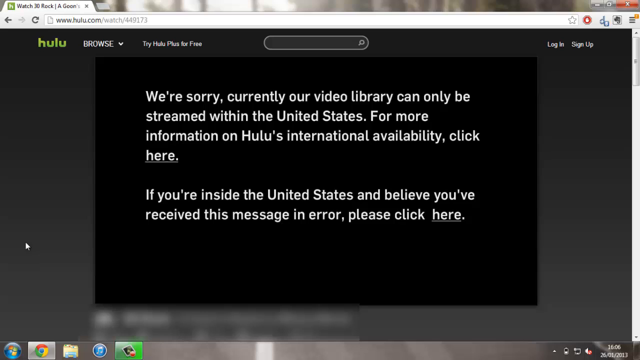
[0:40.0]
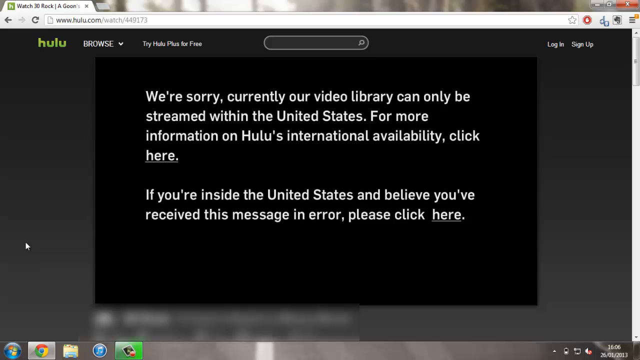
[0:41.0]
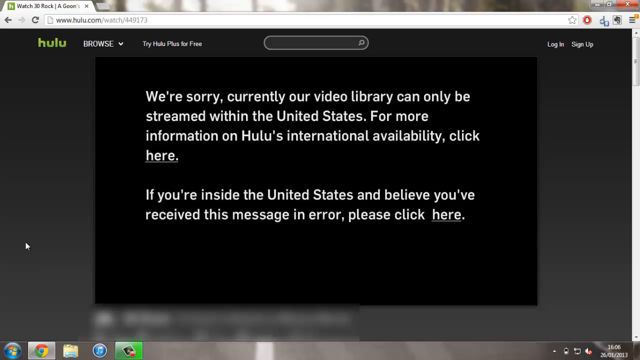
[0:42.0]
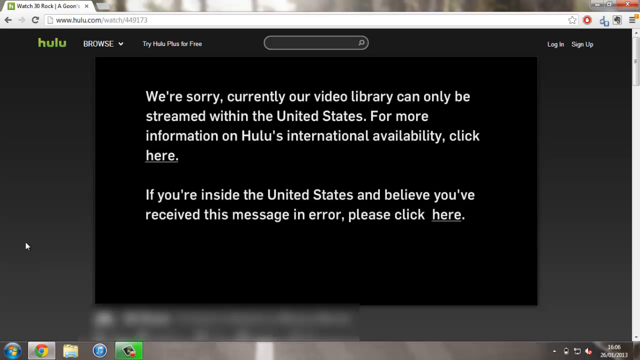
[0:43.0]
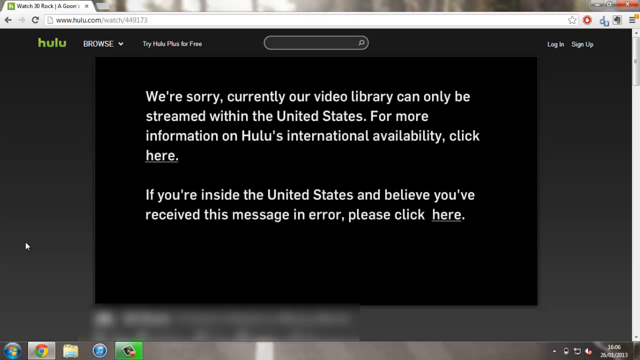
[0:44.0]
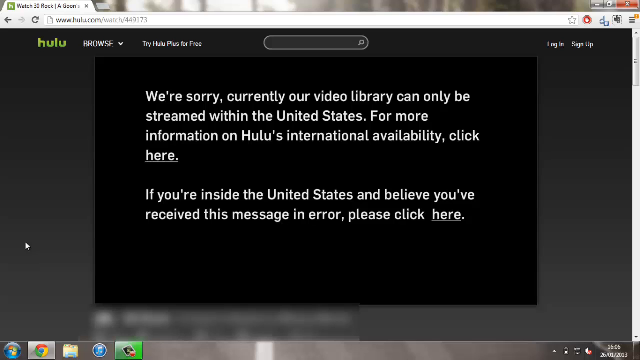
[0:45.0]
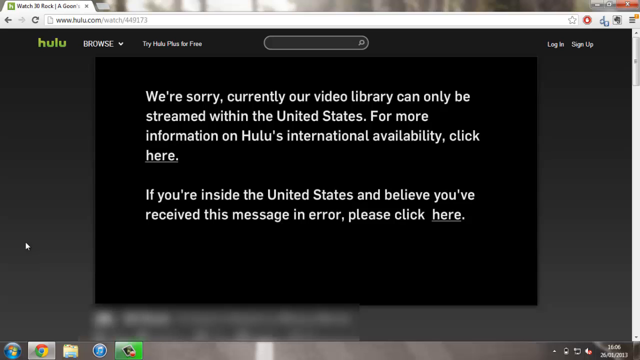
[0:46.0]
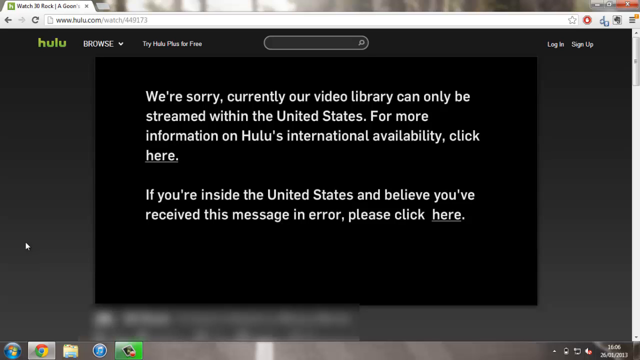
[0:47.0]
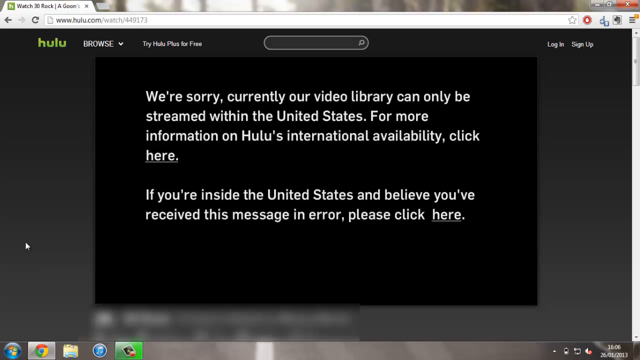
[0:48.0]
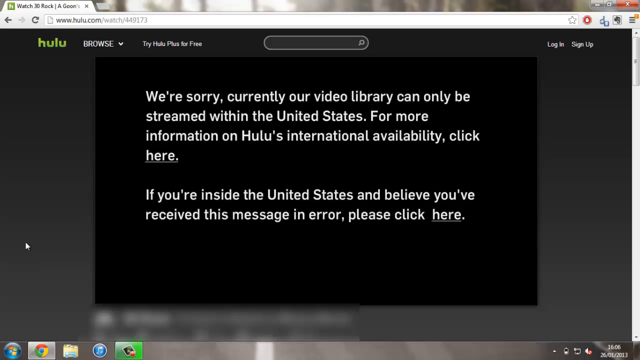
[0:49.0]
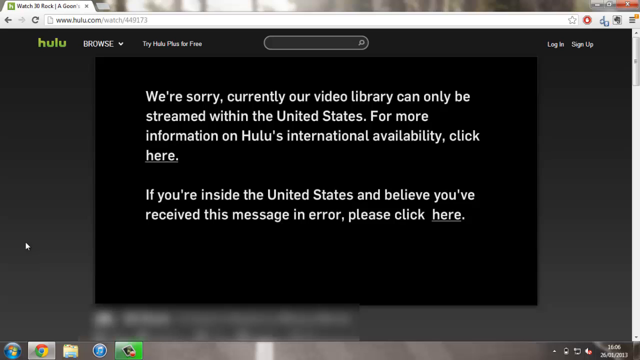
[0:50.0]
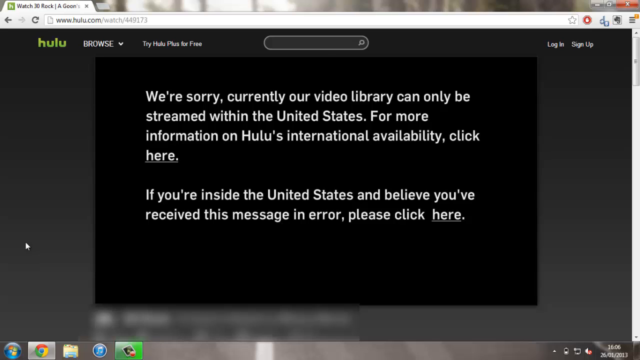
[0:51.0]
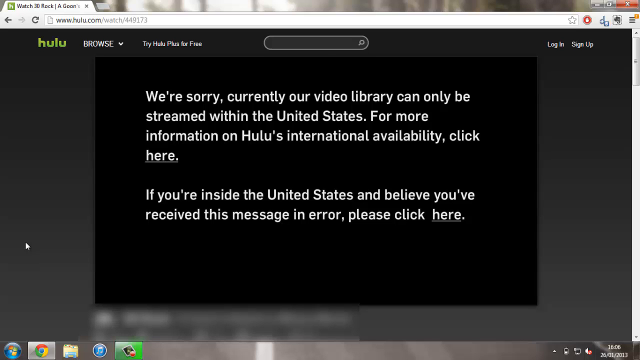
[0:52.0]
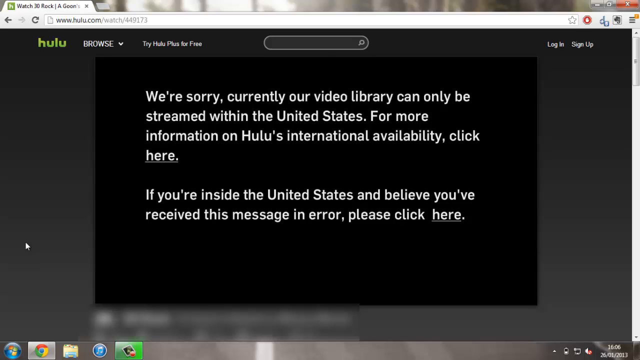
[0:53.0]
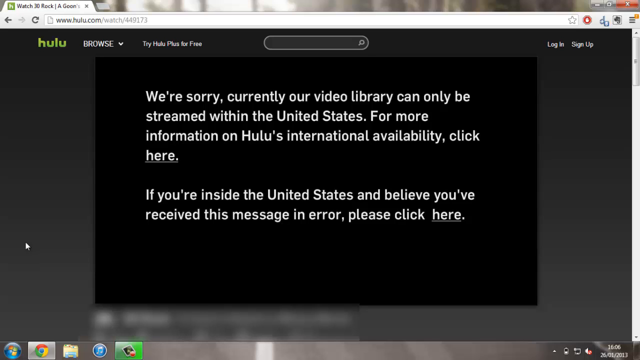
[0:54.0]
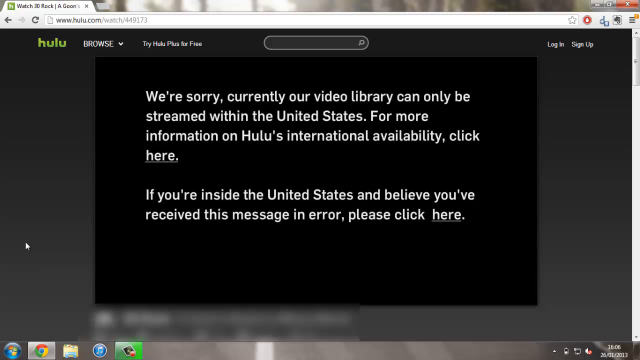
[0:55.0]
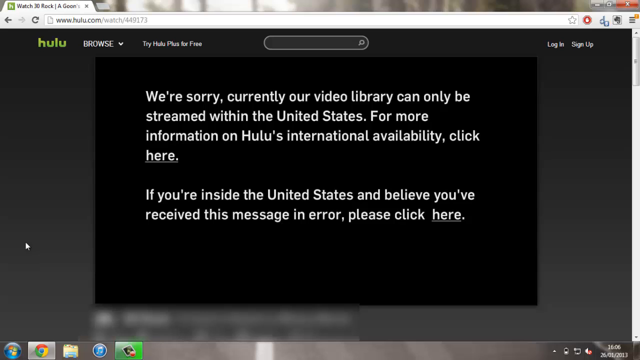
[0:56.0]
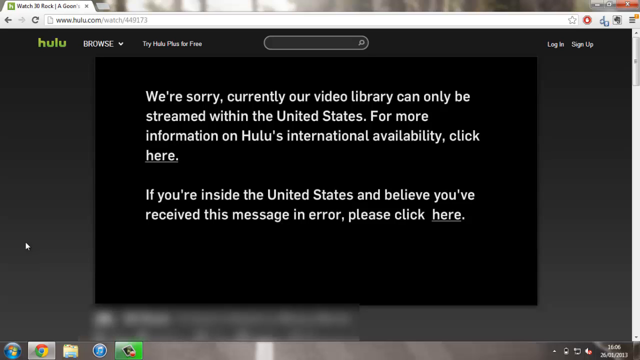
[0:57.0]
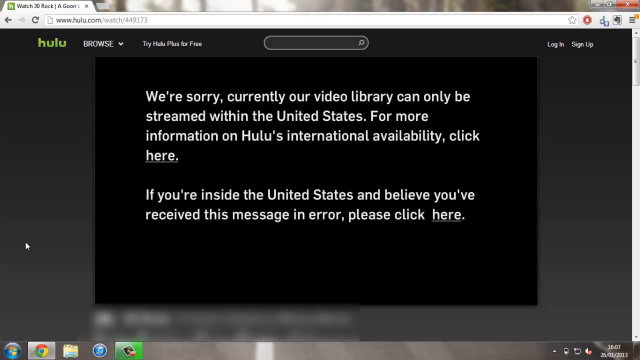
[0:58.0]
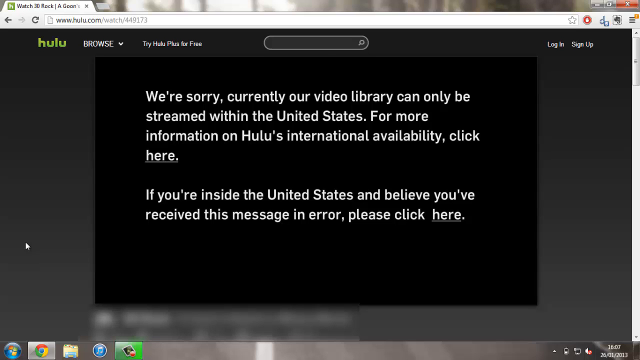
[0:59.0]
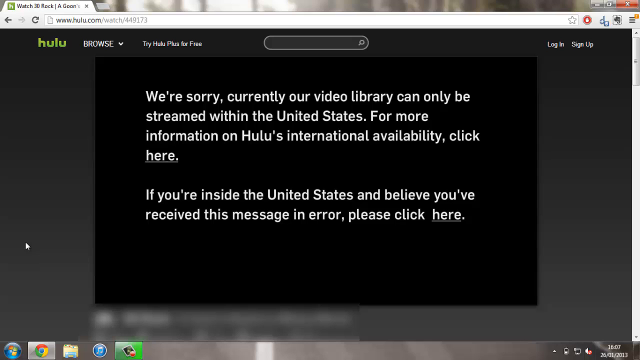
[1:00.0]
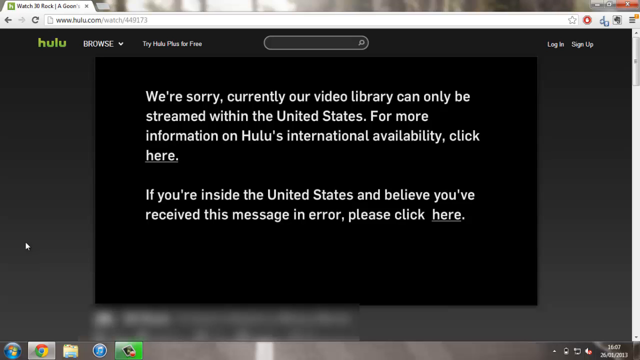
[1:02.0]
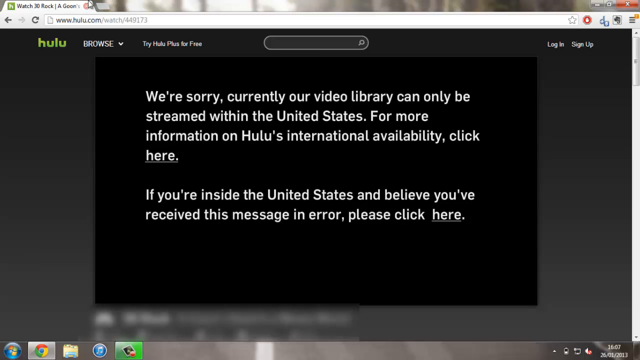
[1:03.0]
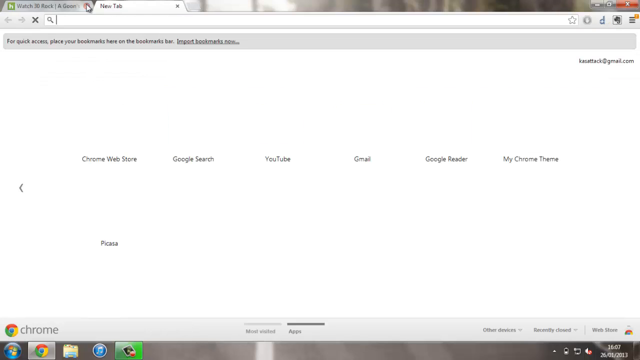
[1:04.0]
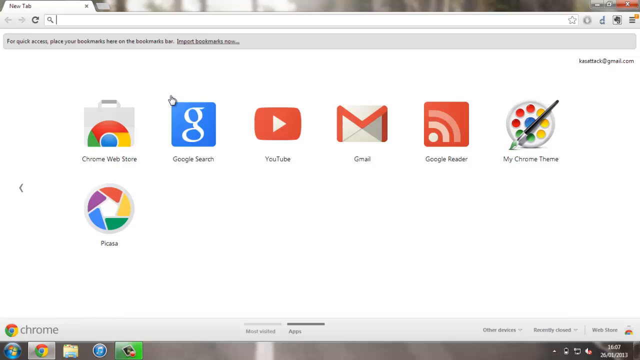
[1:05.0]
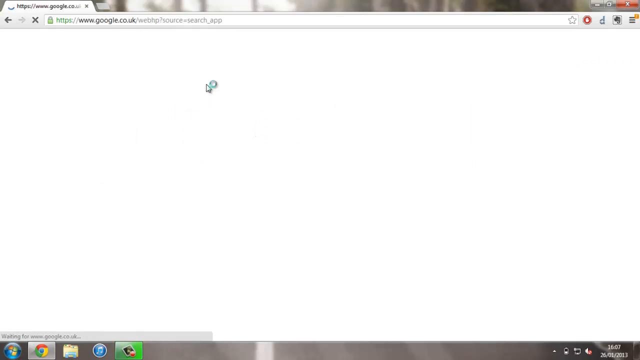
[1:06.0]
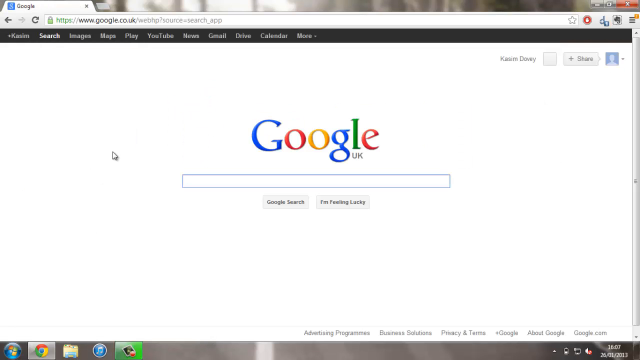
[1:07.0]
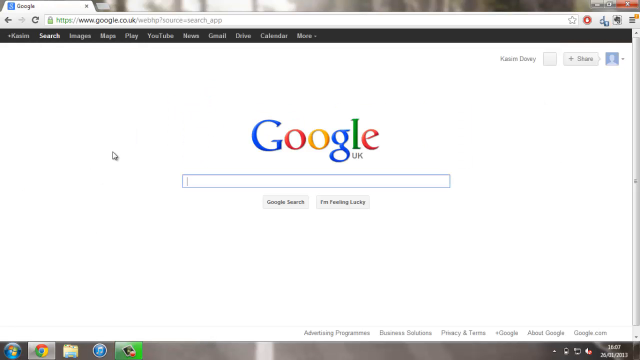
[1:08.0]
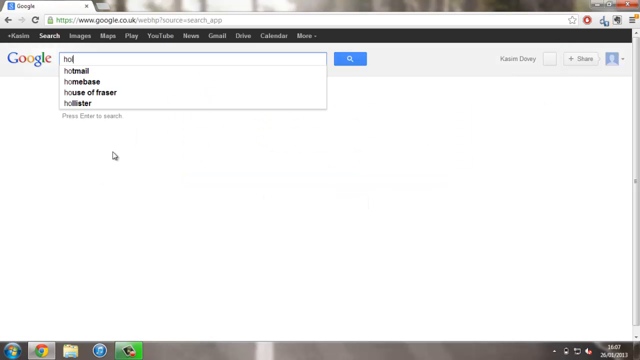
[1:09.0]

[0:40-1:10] The user seemingly stares at or maybe reads the error message for about 10 seconds, with the mouse resting in the lower left quadrant of the screen. The cursor then swoops up to the new tab button; the user clicks it and swiftly closes the old tab. The new tab page shows tiles on a white background: the first row has Chrome Web Store, Google Search, YouTube, Gmail, Google Reader and My Chrome Theme, and below it, in a row of its own, is Picasa. Above the tiles is a gray bar that says "for quick access, place your bookmarks here on the bookmarks bar" with an "Import bookmarks now" hyperlink. The user clicks the Google Search tile, which redirects to Google UK, rests the mouse to the left and starts typing "Hola T" before the video cuts.